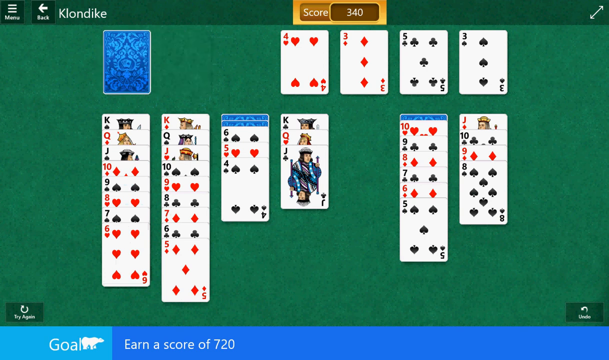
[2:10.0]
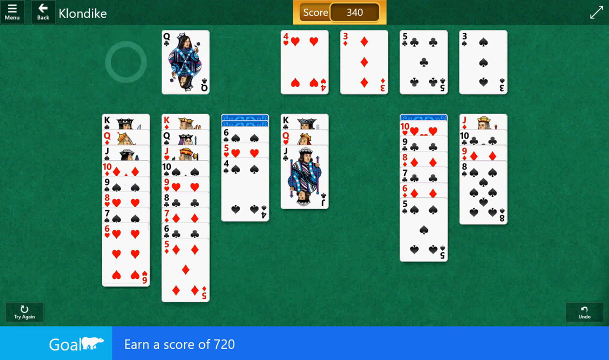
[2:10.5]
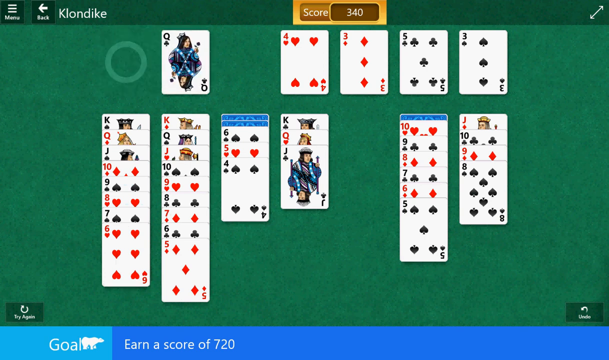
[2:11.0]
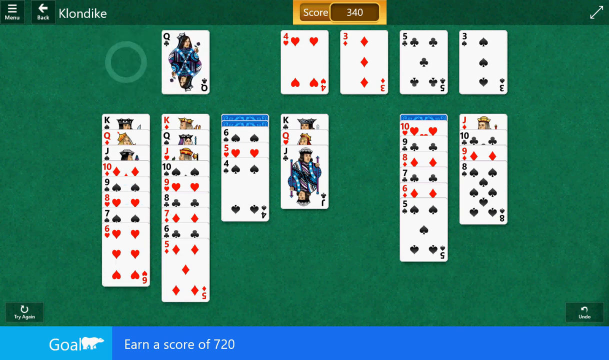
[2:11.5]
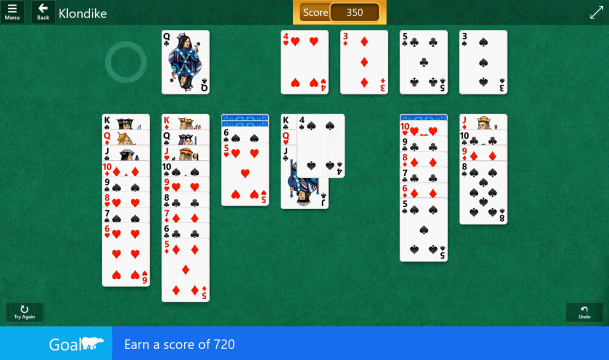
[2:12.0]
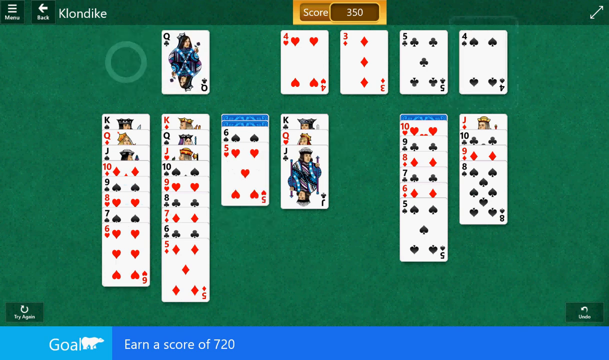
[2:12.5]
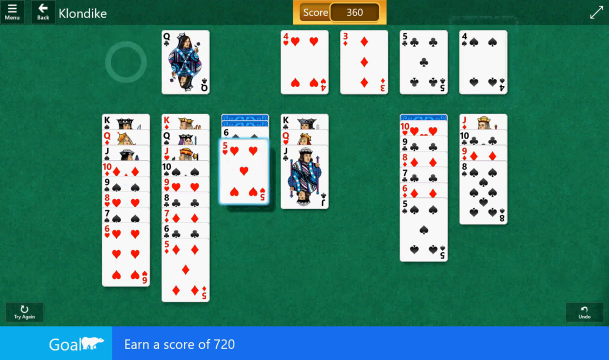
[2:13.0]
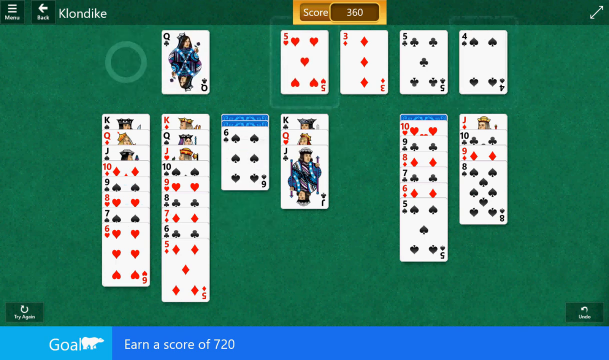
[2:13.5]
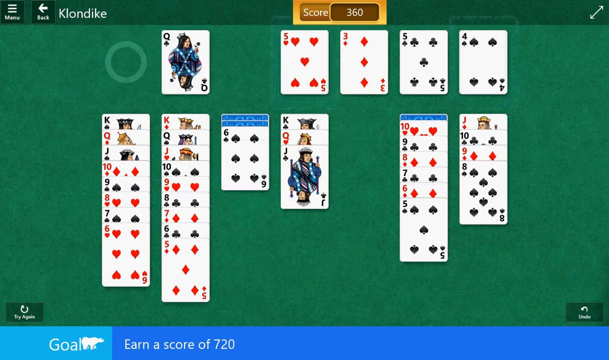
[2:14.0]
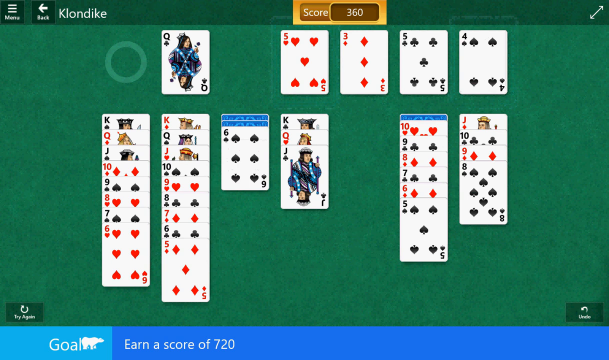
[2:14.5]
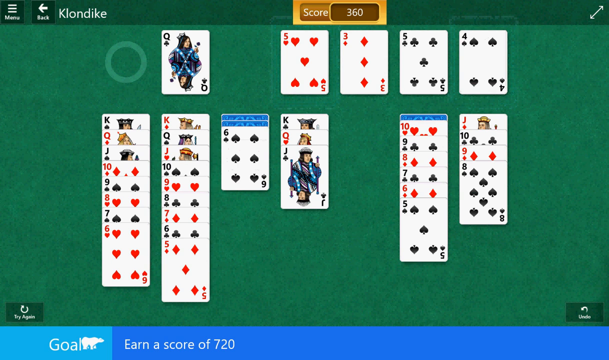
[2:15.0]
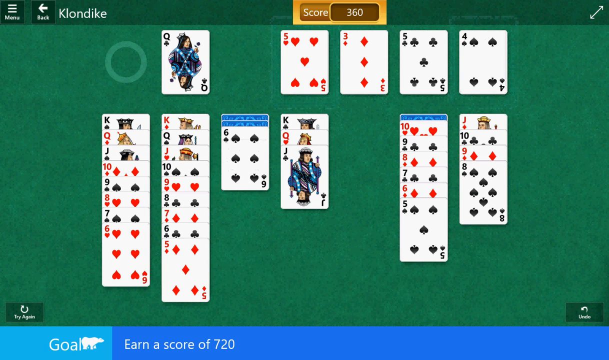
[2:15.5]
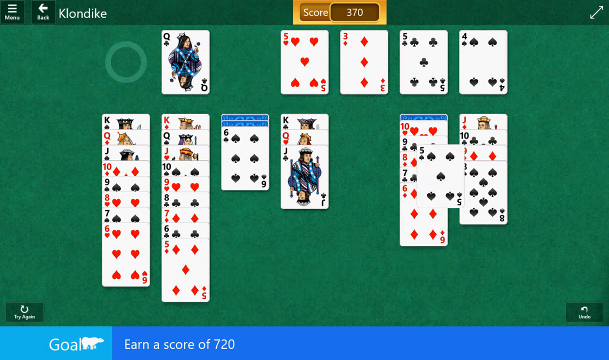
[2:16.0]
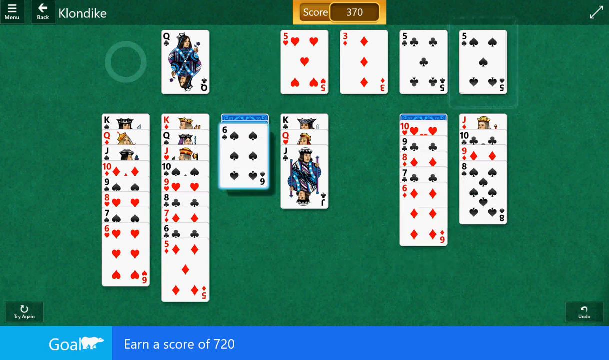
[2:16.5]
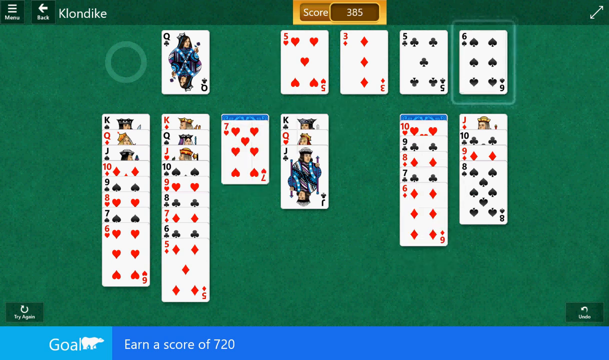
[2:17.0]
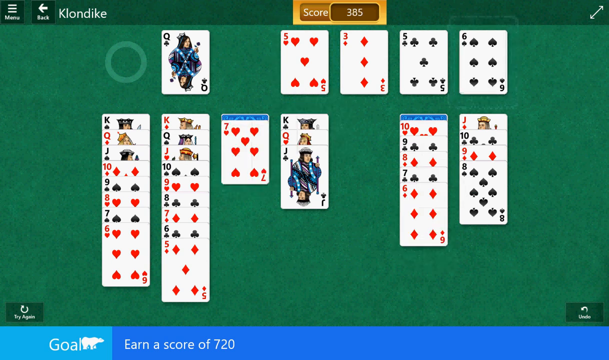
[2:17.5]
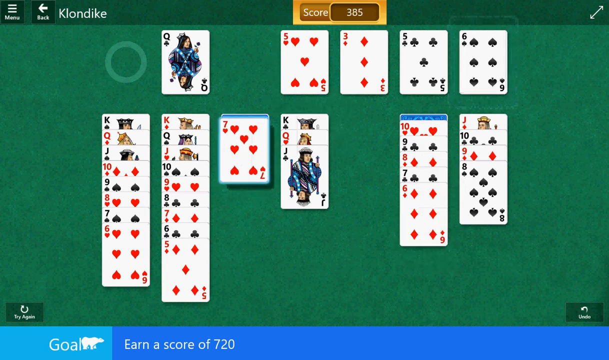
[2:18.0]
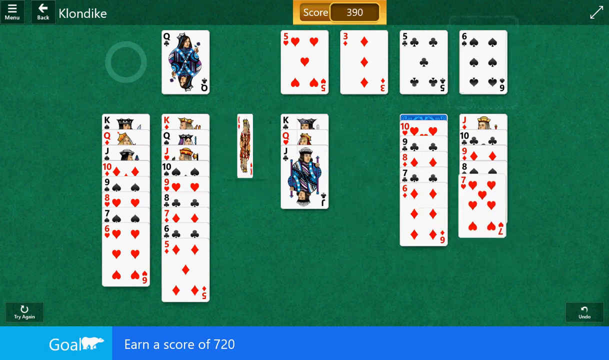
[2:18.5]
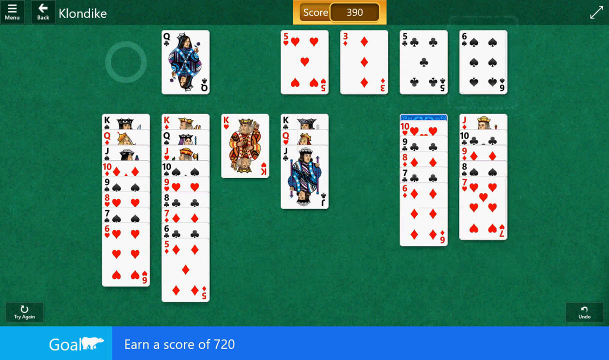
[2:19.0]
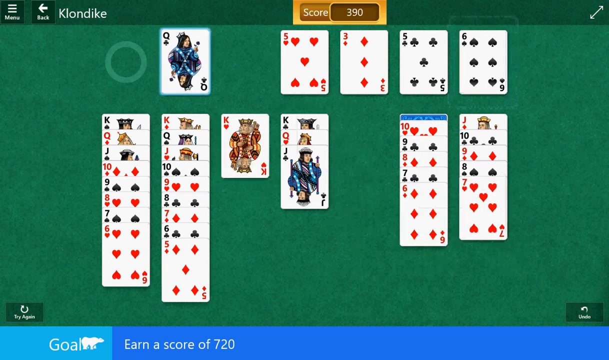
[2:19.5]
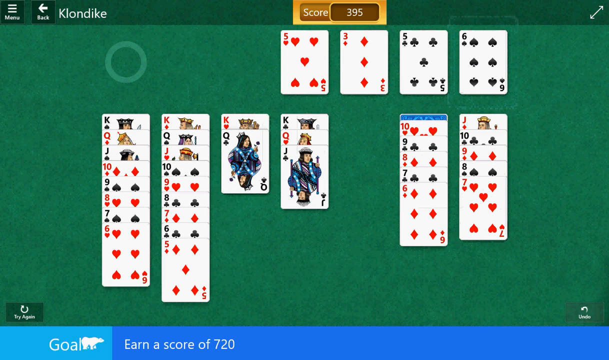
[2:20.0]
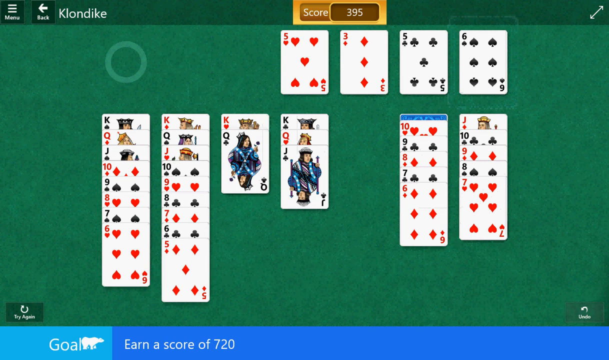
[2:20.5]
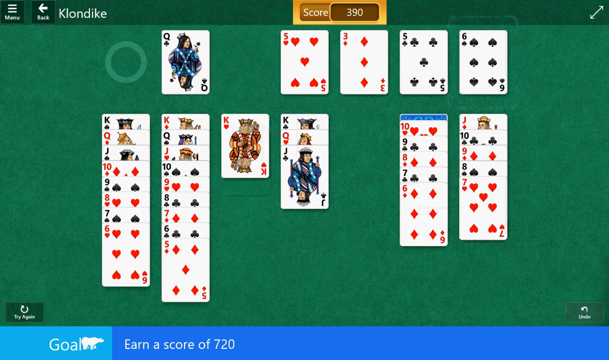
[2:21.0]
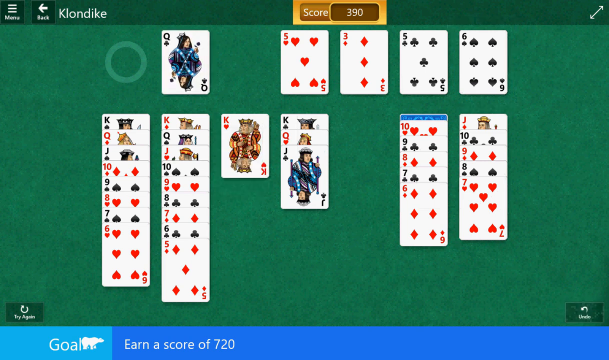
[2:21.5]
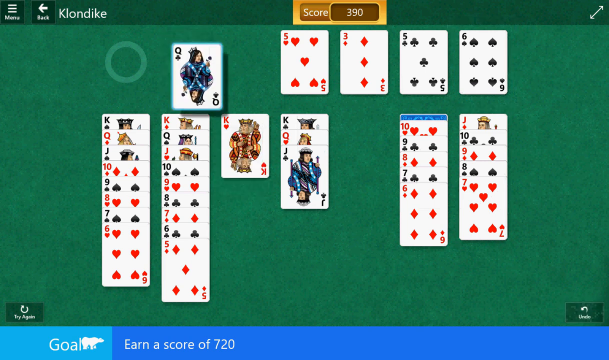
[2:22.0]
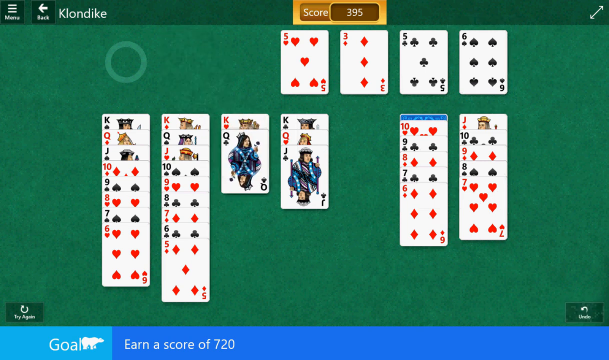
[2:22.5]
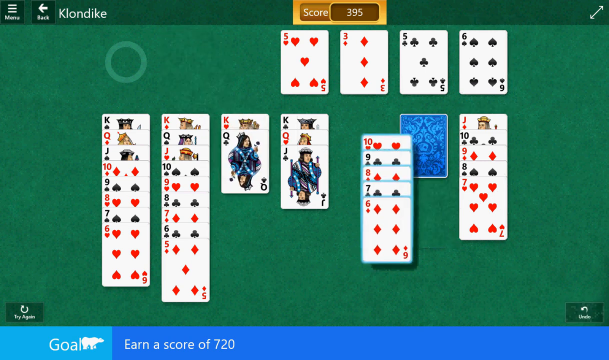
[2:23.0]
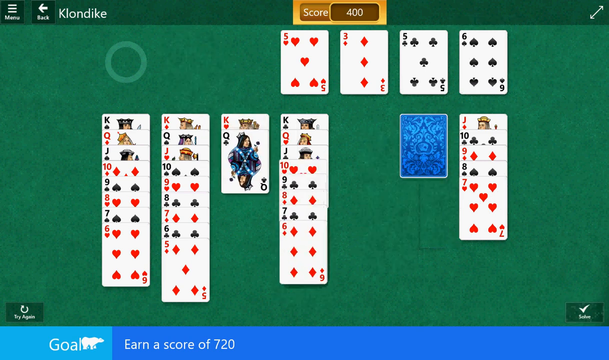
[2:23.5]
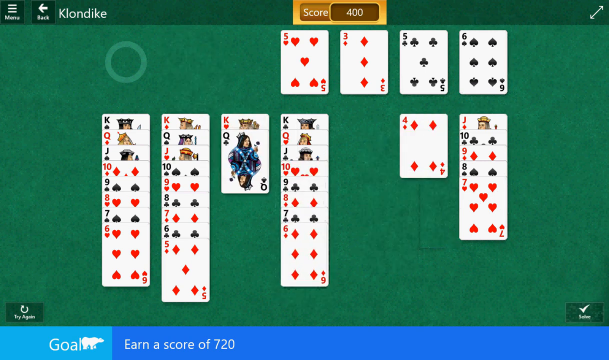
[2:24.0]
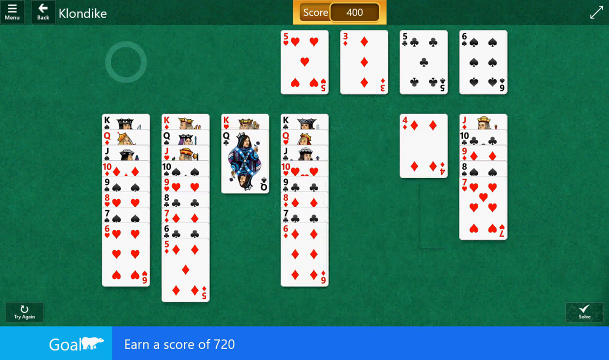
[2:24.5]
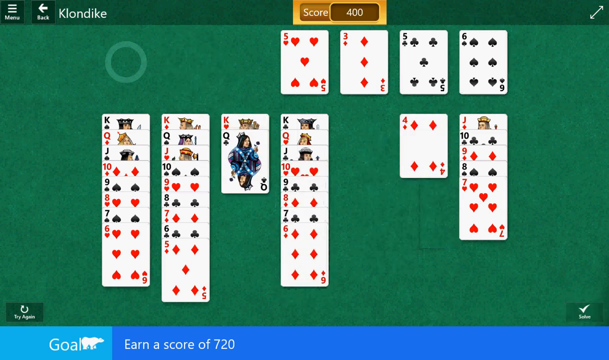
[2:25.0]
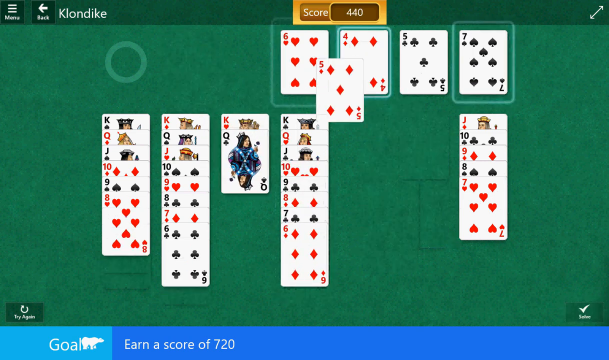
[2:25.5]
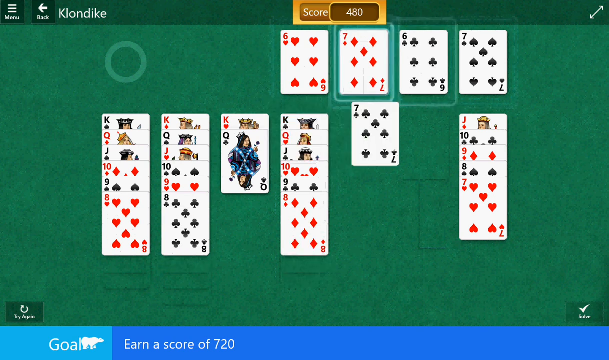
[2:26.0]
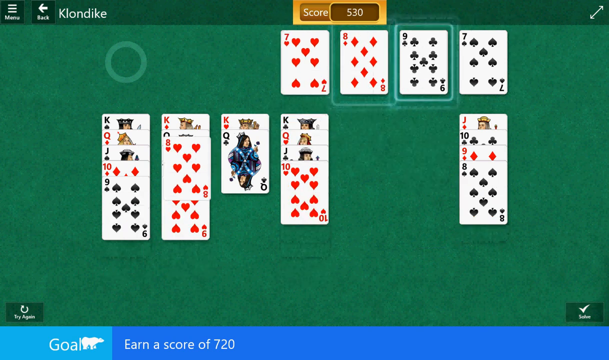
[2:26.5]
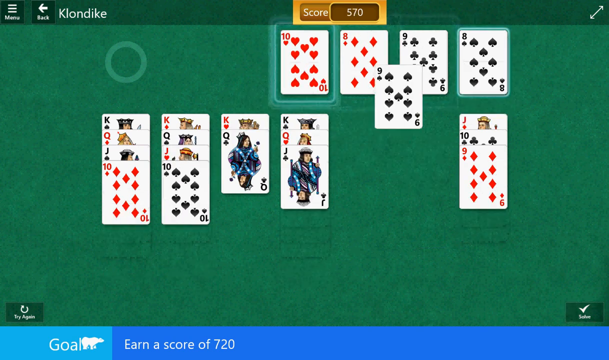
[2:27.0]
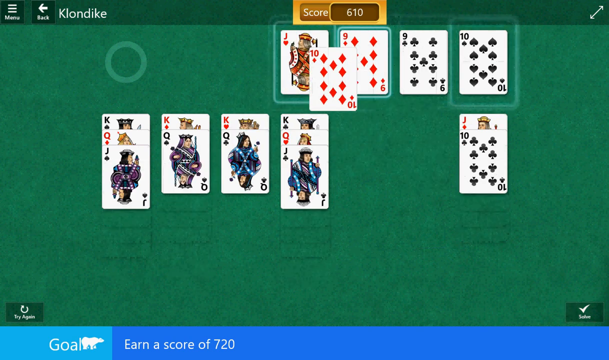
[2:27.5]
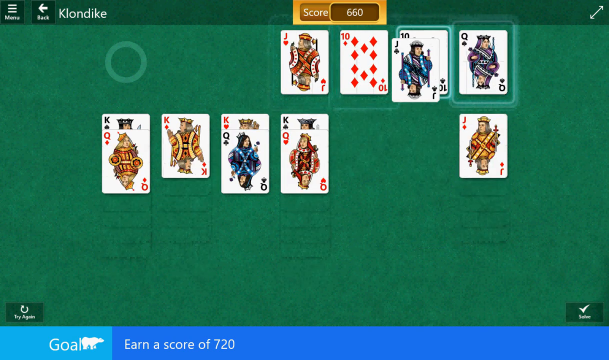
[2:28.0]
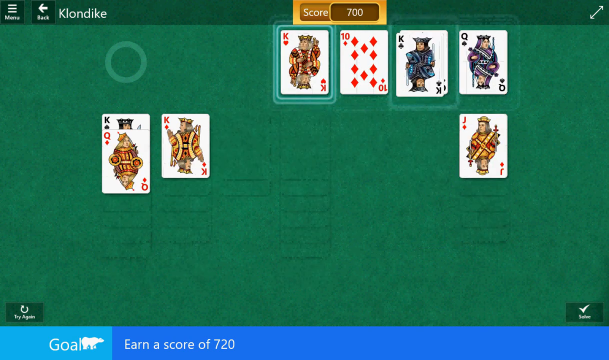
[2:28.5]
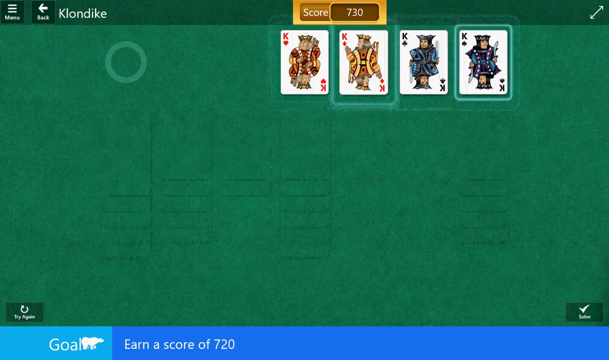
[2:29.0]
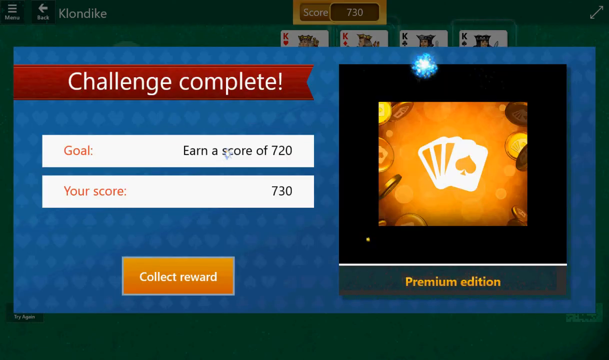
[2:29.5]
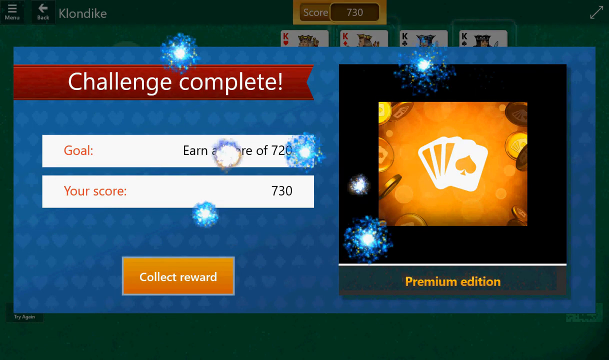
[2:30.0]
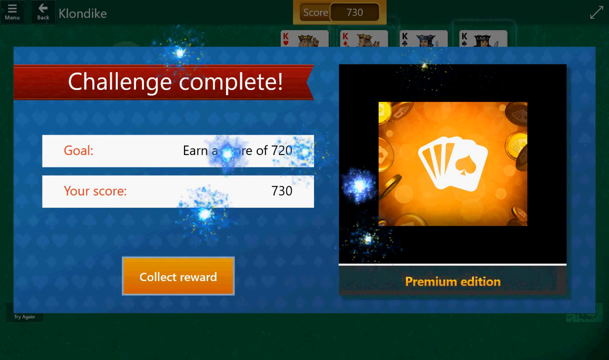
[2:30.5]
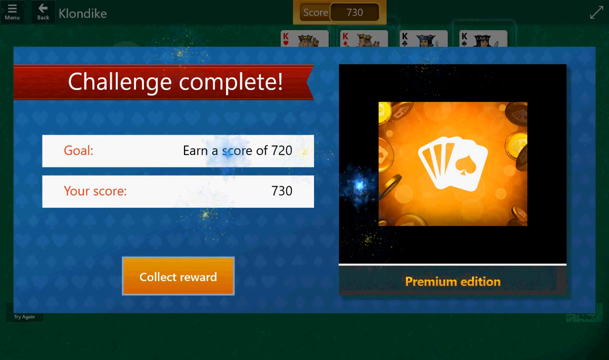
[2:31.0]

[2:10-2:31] Someone is playing a game called Klondike on their computer, with the title in the upper left corner along with a back button and a menu button. In the middle, the score is shown in a brown box lined with yellow. The whole background is a brilliant green, the card backs are blue, and the card faces look like a normal playing deck. The score starts at 340 points as cards continue to be moved up onto the ace piles, some of which already have a 3, a 5, or a 6. Everything gets uncovered, and the game completes by itself very fast, with cards going up from 6, 7, 8, 9, 10, Jack, Queen, to King until all the cards are up and the game is won. At the very end the score is 730, and text reads "challenge complete" and "goal earn score of 720", with the score of 730 and a button to collect the reward.